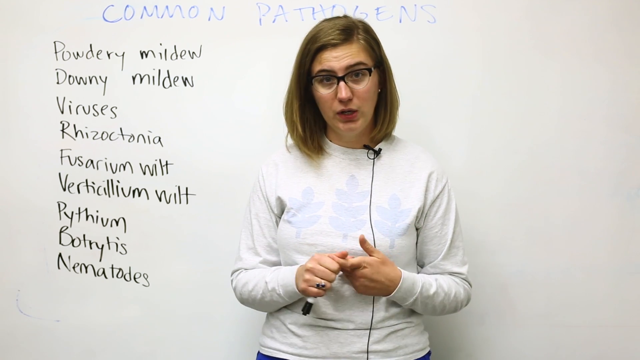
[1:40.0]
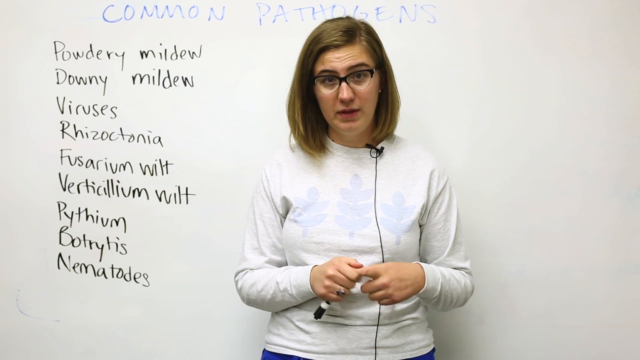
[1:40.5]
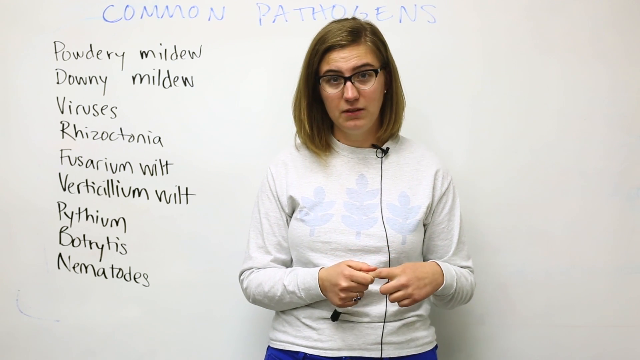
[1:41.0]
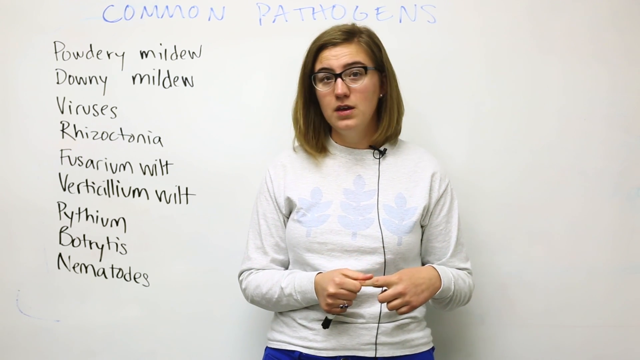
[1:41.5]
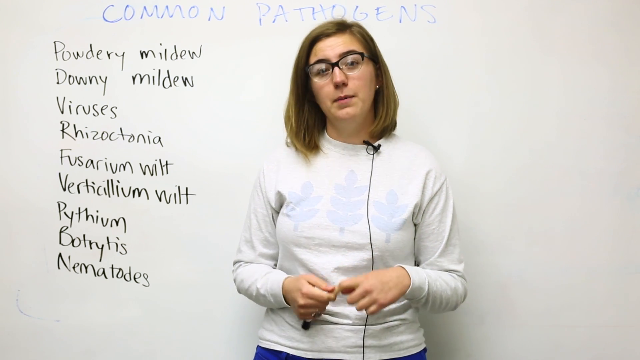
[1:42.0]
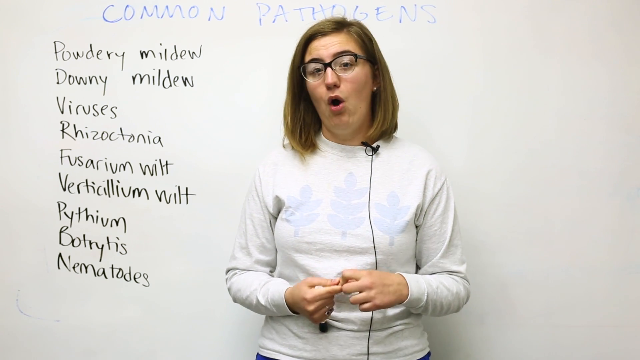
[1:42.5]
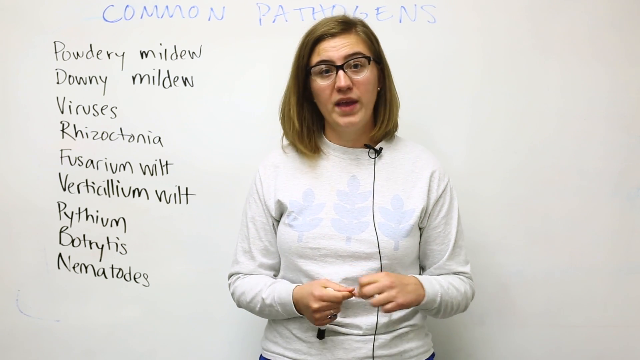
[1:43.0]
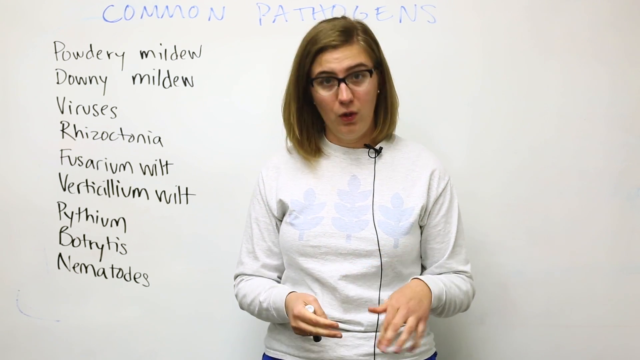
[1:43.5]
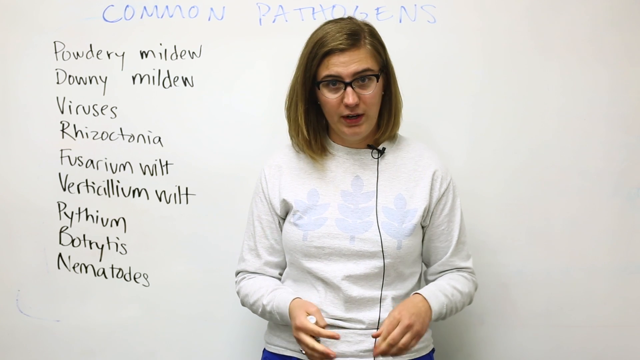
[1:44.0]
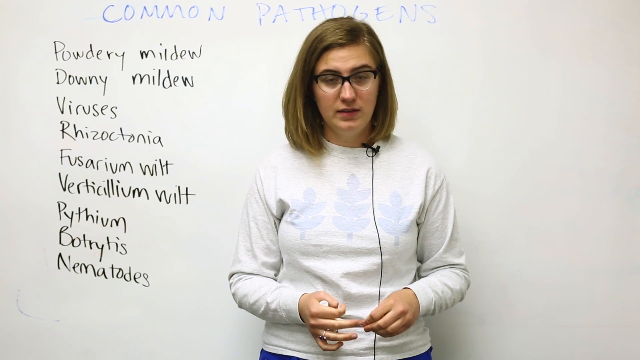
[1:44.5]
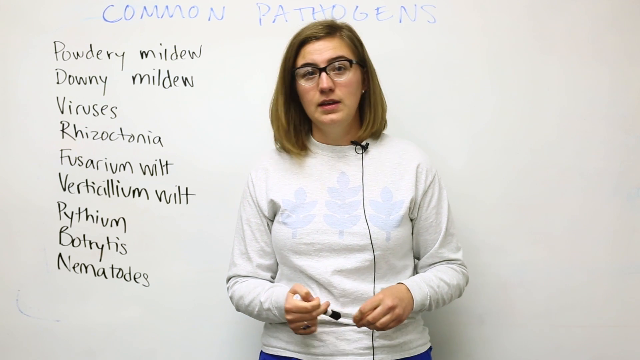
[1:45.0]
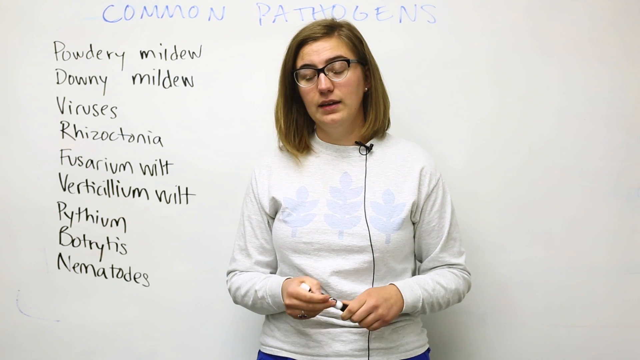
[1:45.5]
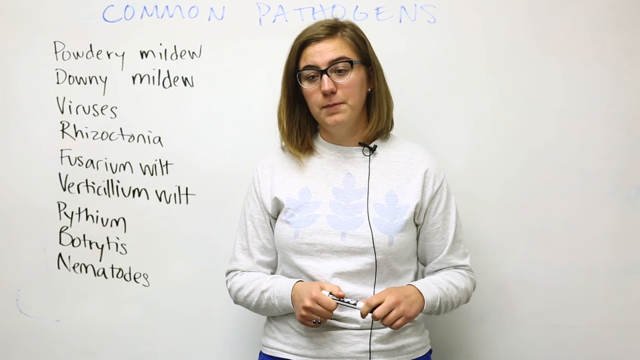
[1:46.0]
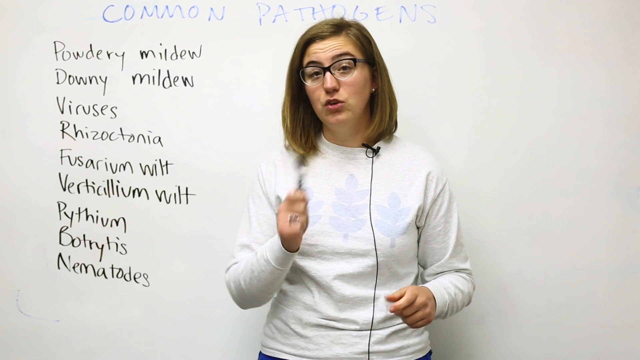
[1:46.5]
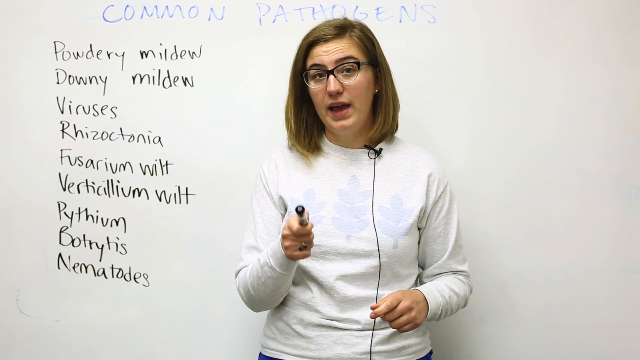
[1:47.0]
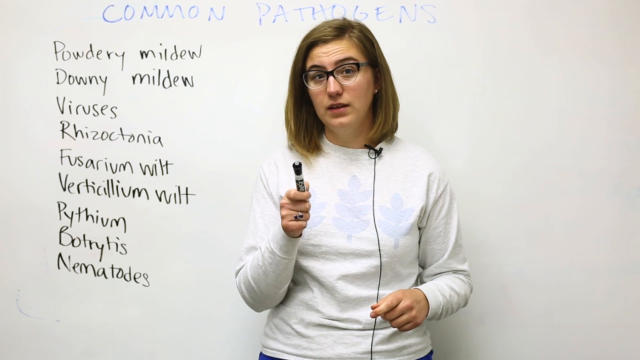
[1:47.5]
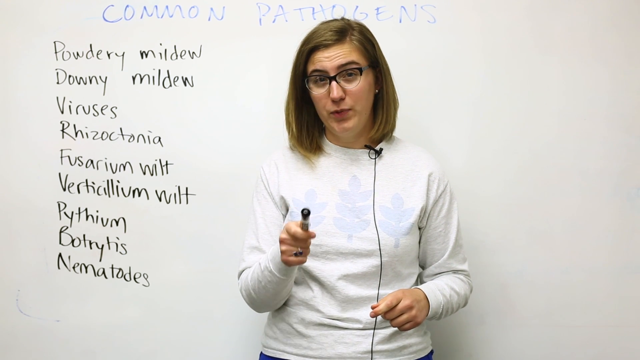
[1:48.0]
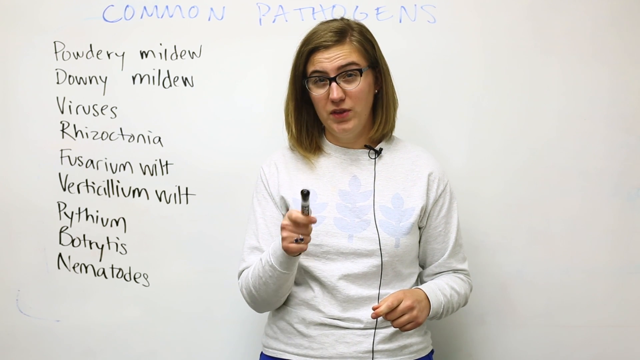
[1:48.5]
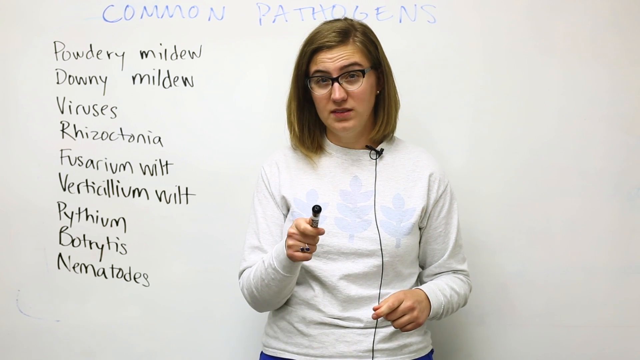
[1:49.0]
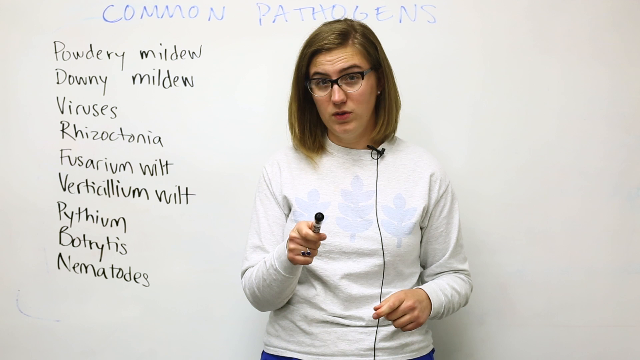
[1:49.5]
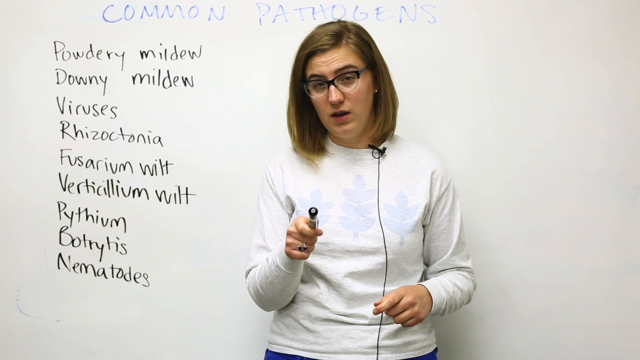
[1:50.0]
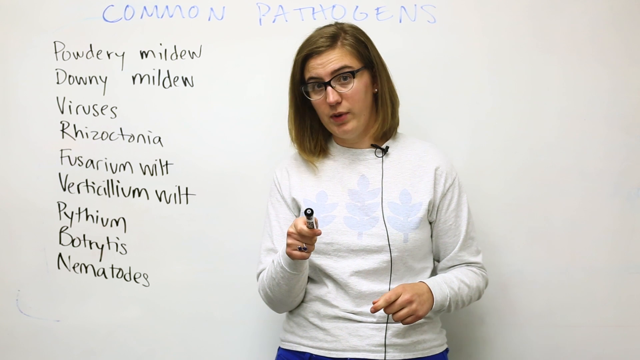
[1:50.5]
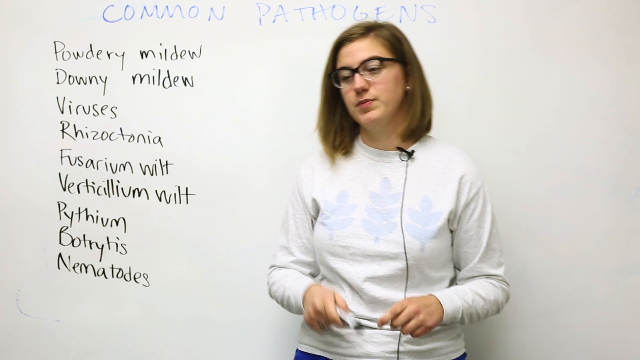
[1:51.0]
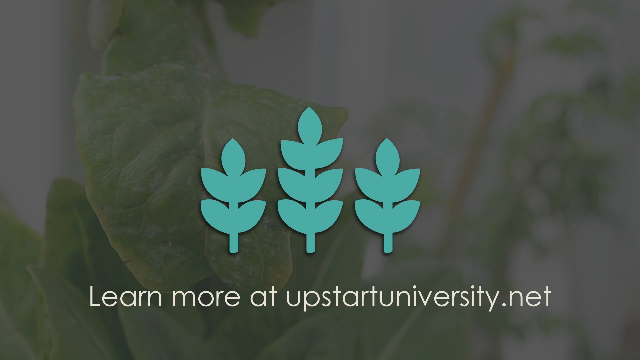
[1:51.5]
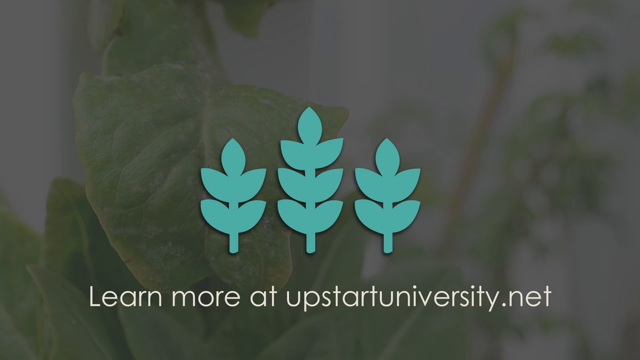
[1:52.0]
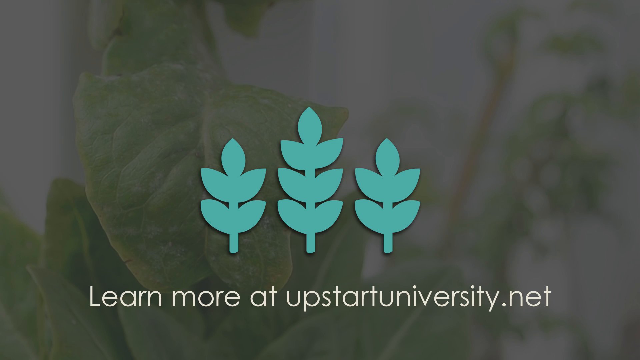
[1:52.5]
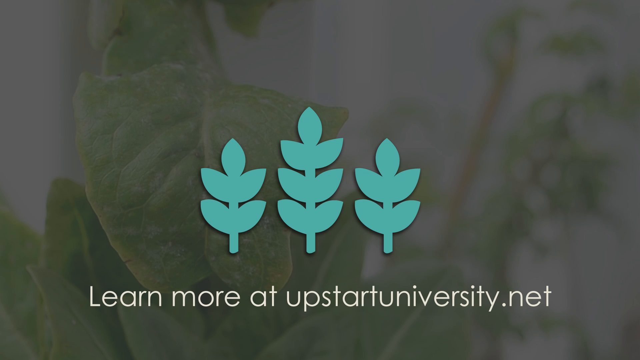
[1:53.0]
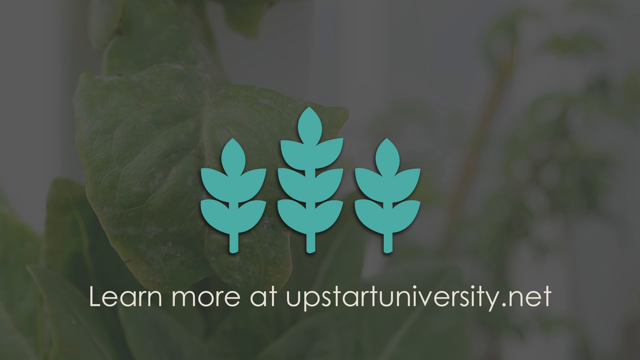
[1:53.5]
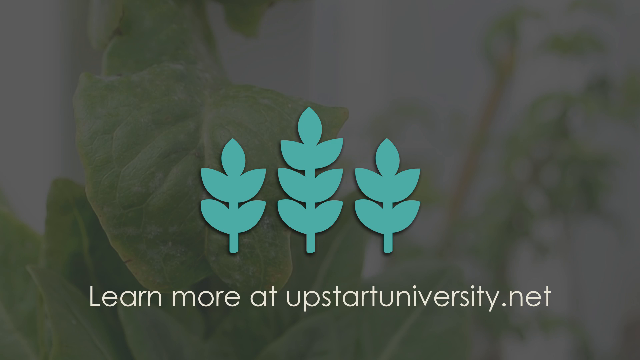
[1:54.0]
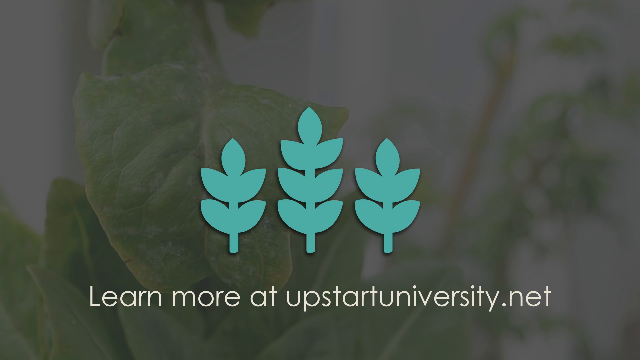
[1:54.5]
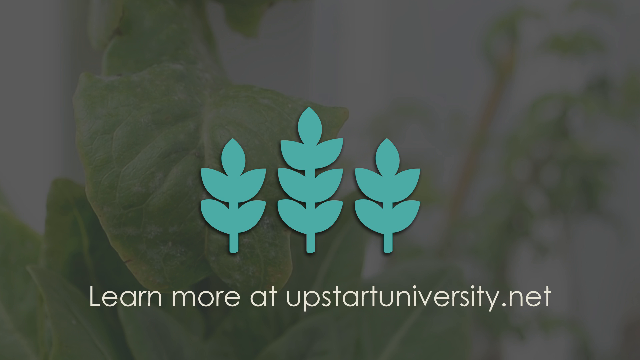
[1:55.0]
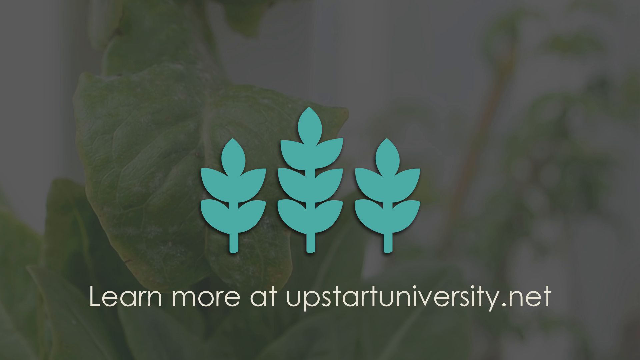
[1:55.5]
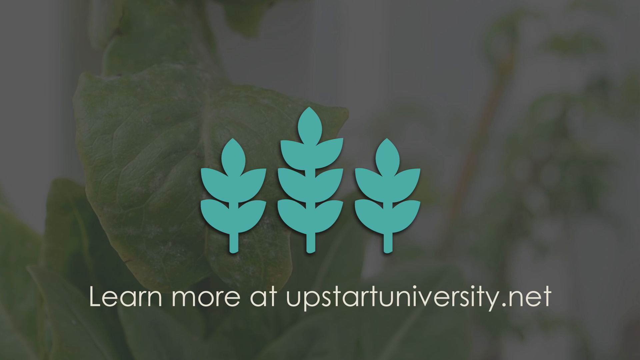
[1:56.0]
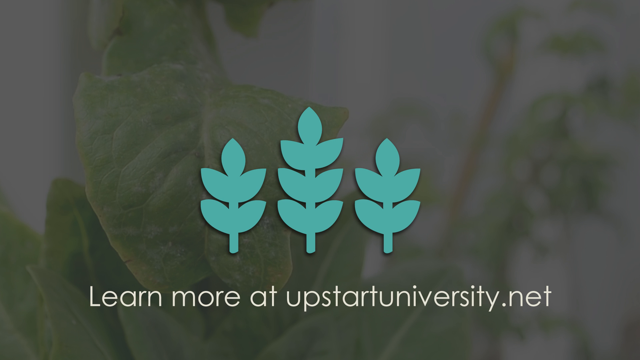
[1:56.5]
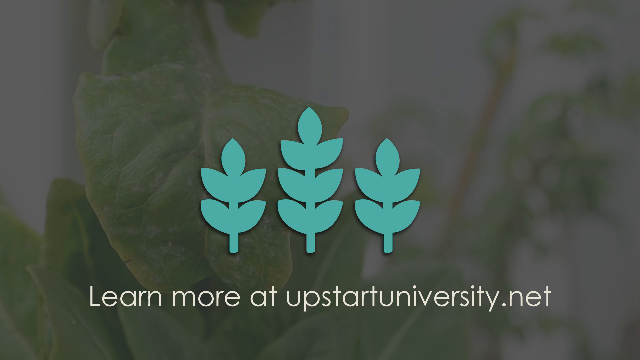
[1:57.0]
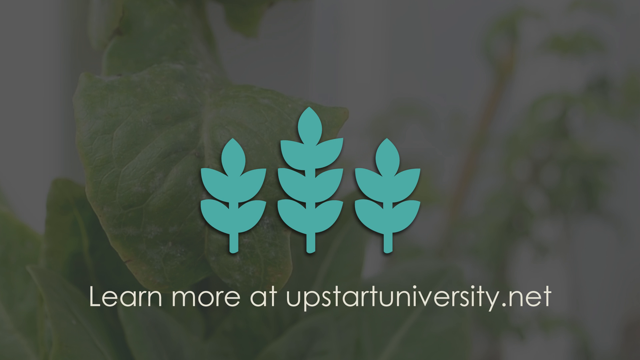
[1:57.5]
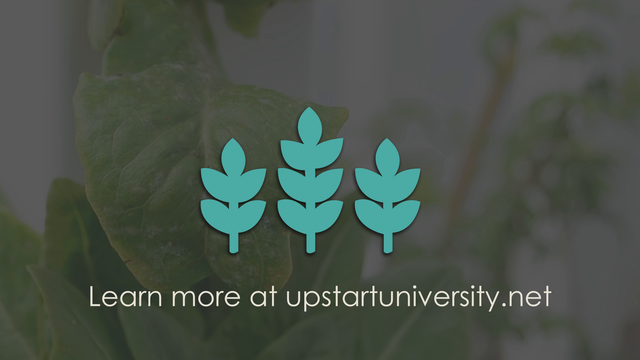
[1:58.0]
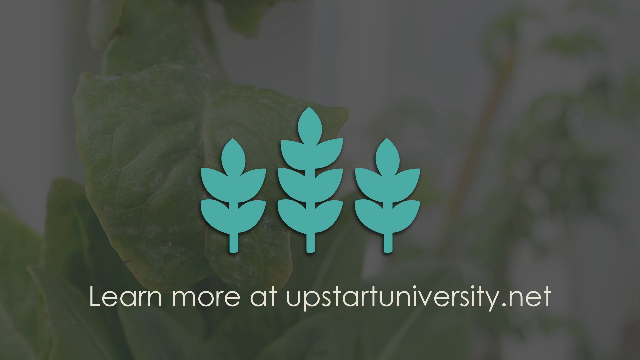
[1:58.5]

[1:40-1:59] A woman stands in front of a whiteboard, talking. On the whiteboard behind her, the words "common pathogen" are written at the top in blue dry erase marker, and below that several words are written in black marker, including "powdery mildew", "downy mildew" and "viruses", with several other common pathogens underneath. She wears a white long-sleeved T-shirt, has medium-length brown hair, and wears glasses. Her hands move around the entire time she talks, and from time to time she passes the marker from one hand to the other. A black microphone is clipped onto her shirt, with its black cord running down the front of her shirt toward the ground. Toward the end of the video, a logo of three little green trees or three leaves appears, and underneath it the text reads "learn more at upstartuniversity.net".